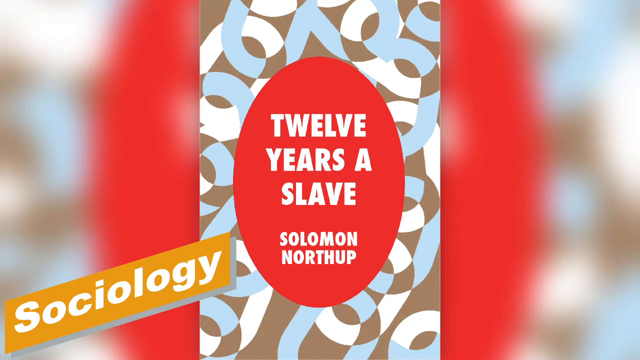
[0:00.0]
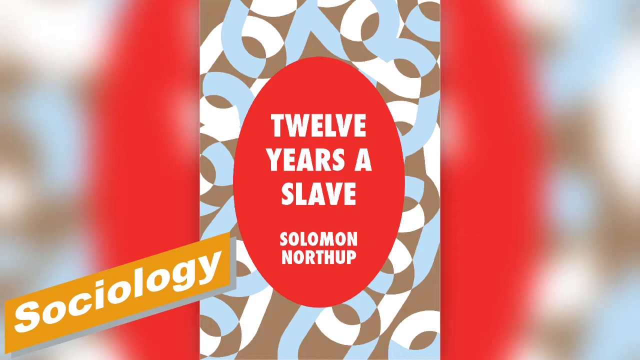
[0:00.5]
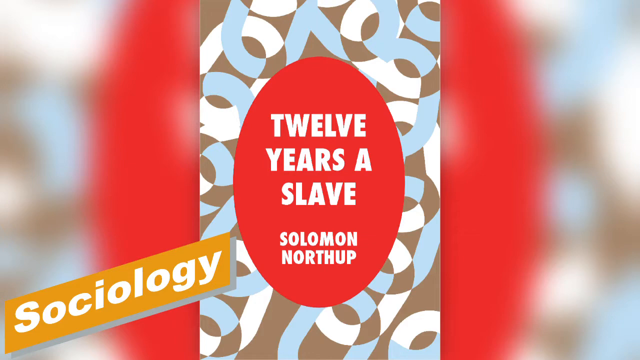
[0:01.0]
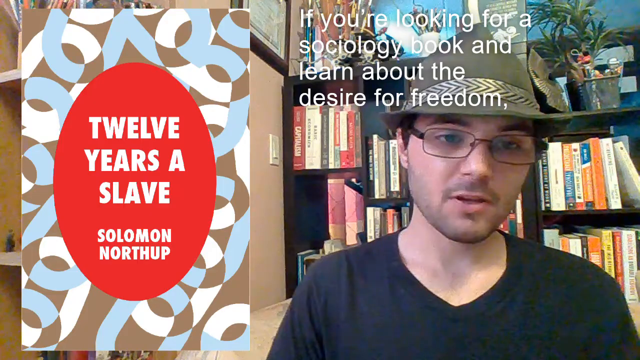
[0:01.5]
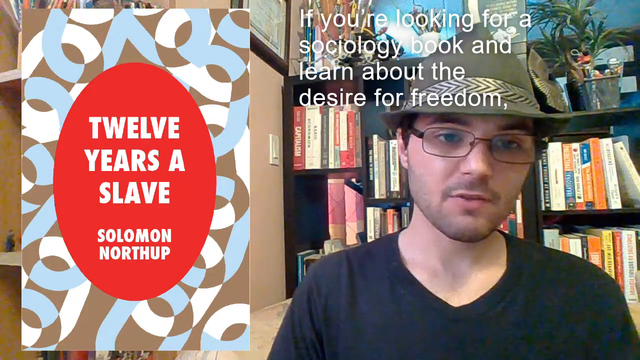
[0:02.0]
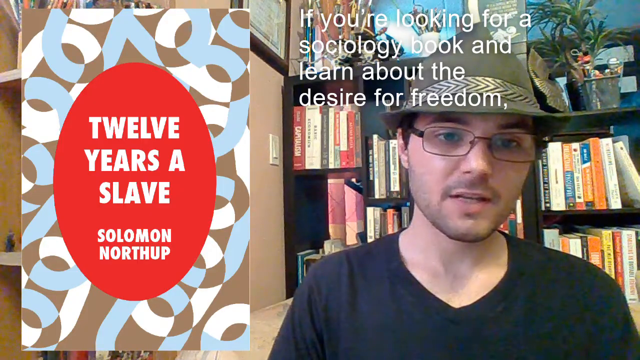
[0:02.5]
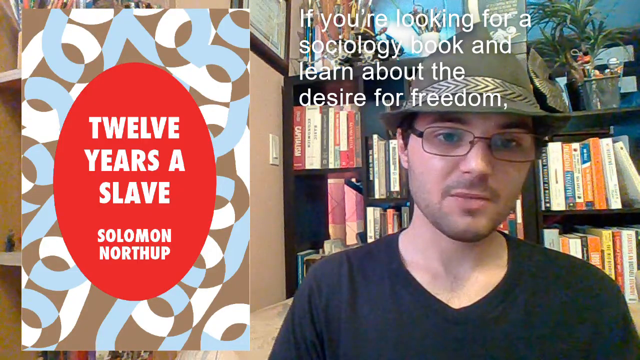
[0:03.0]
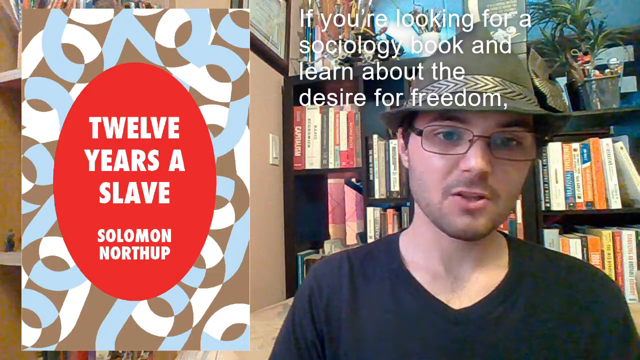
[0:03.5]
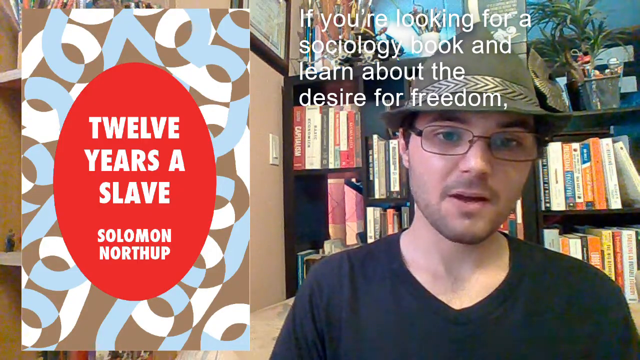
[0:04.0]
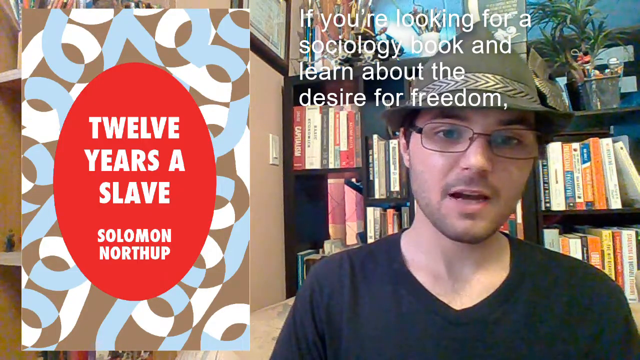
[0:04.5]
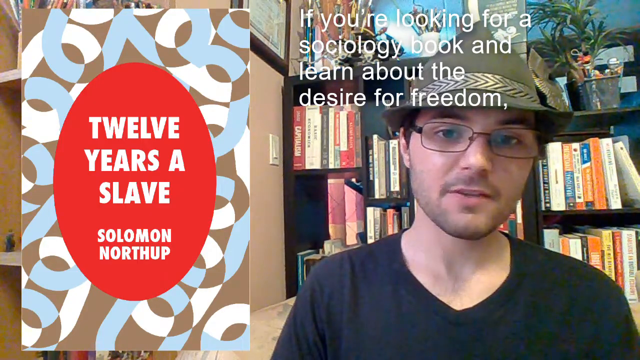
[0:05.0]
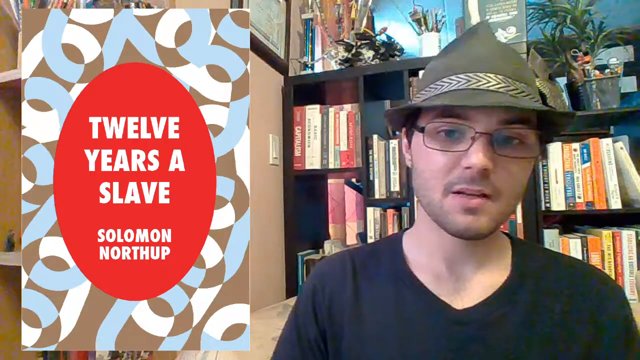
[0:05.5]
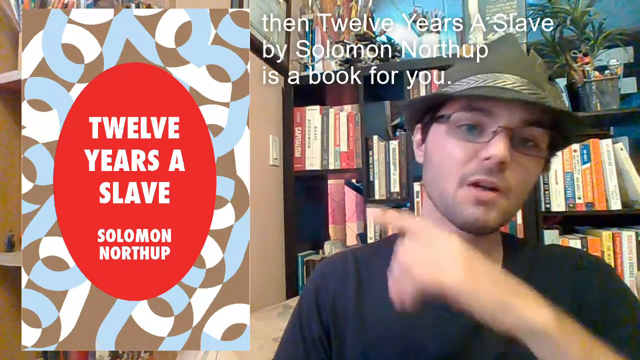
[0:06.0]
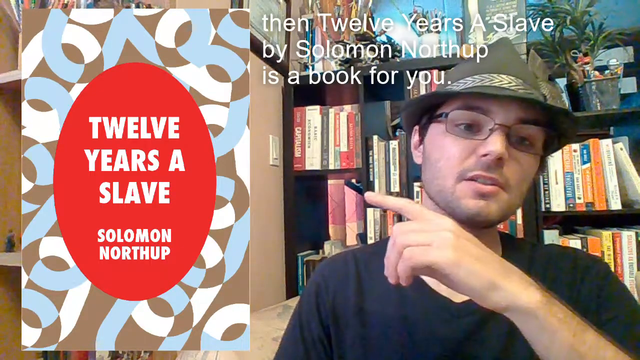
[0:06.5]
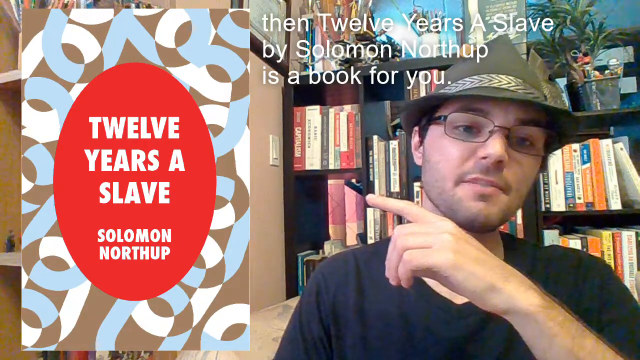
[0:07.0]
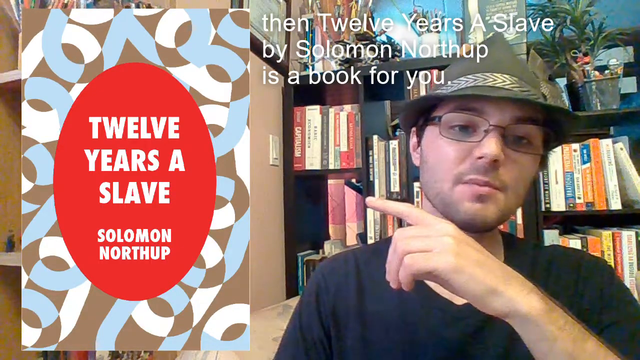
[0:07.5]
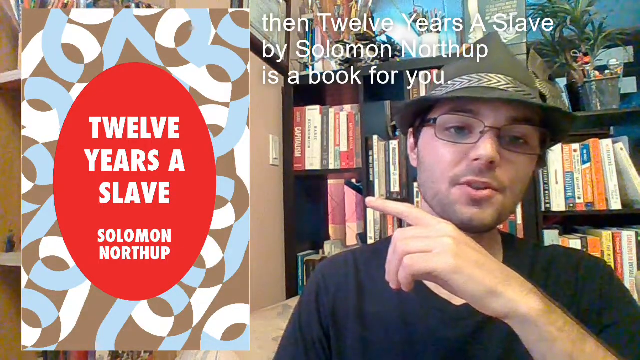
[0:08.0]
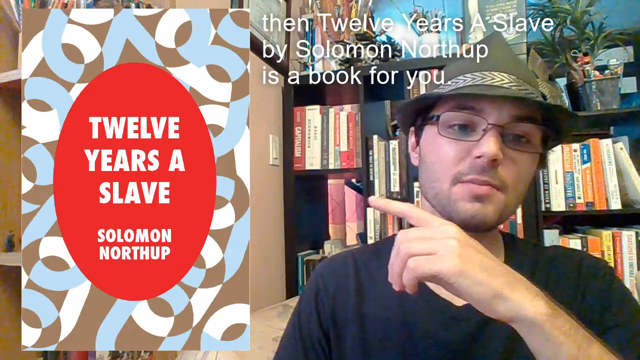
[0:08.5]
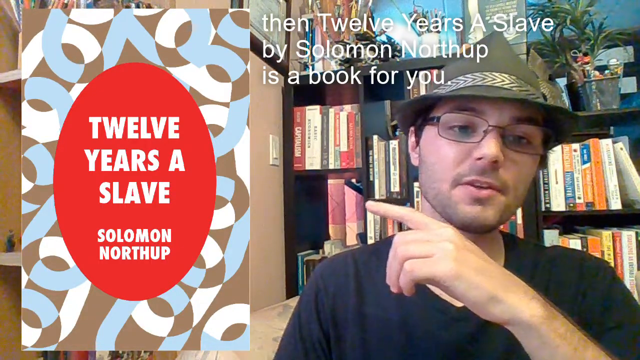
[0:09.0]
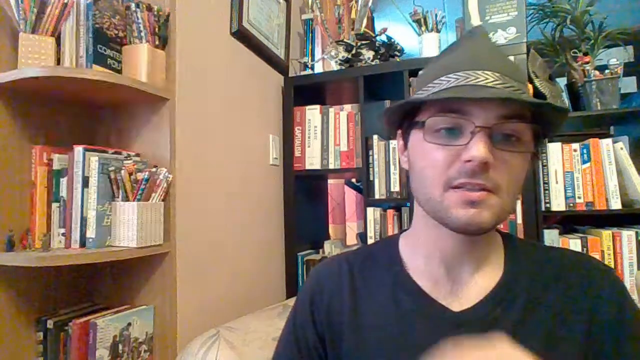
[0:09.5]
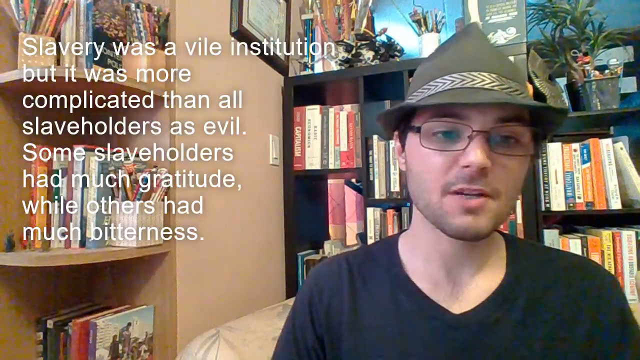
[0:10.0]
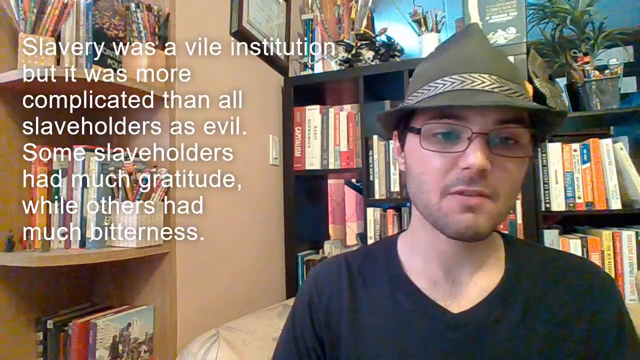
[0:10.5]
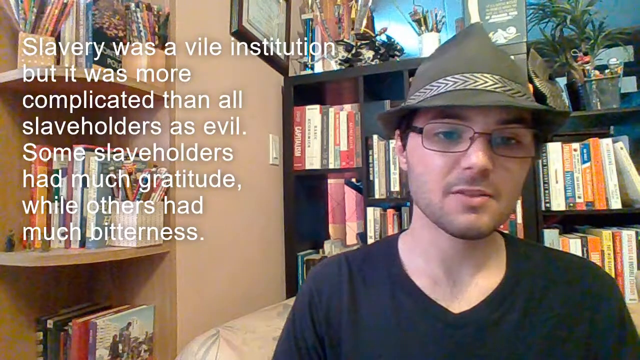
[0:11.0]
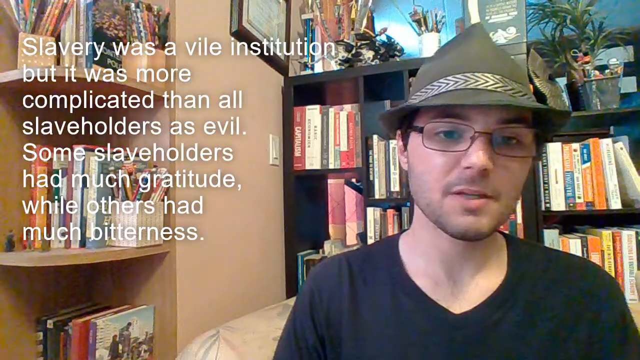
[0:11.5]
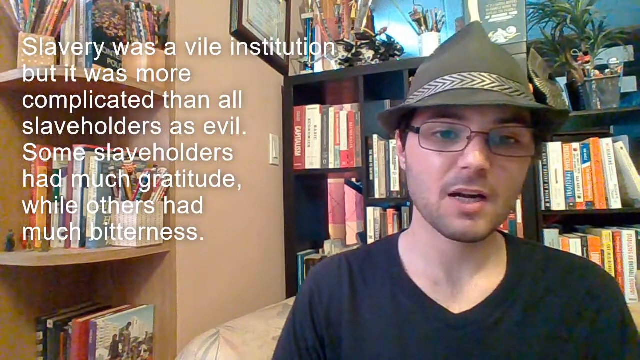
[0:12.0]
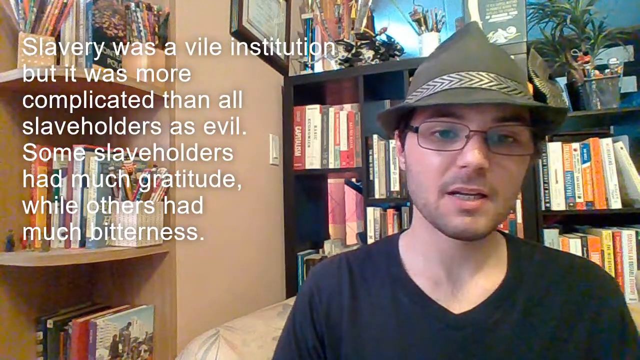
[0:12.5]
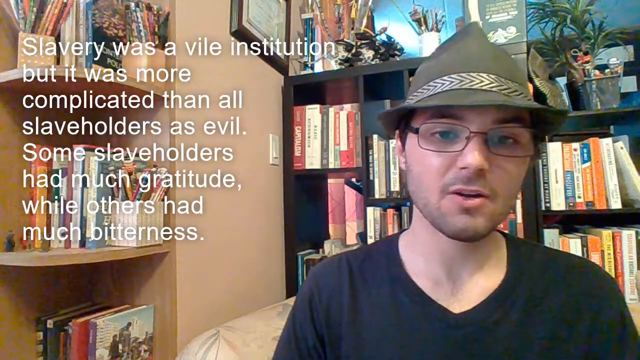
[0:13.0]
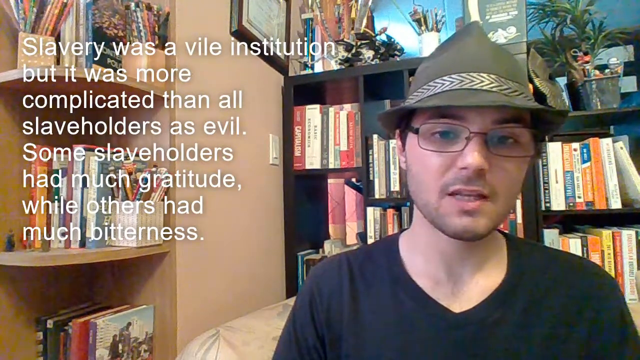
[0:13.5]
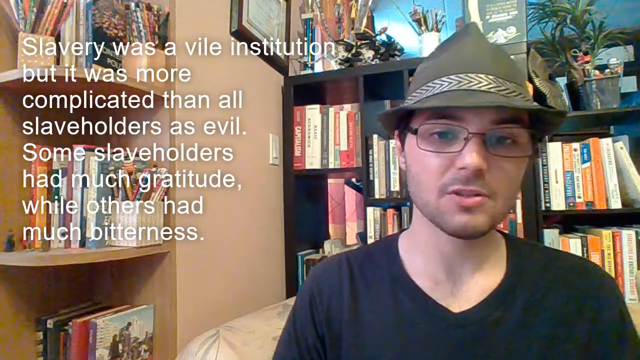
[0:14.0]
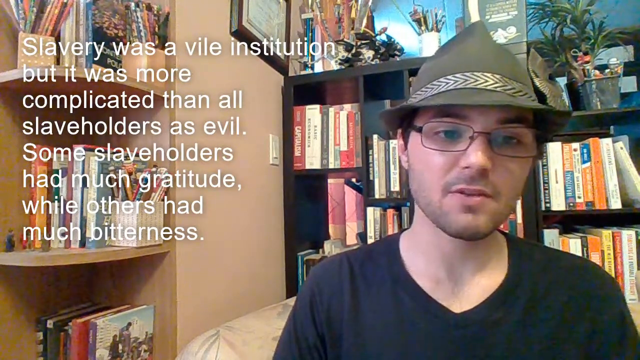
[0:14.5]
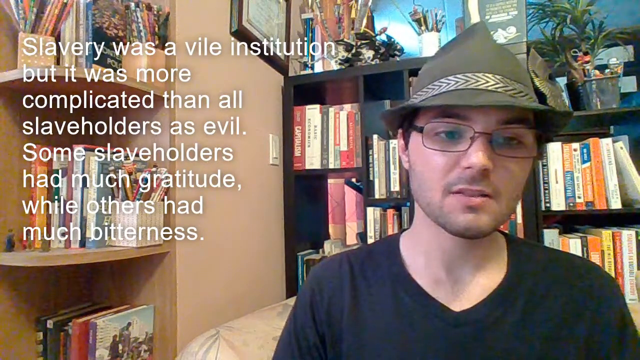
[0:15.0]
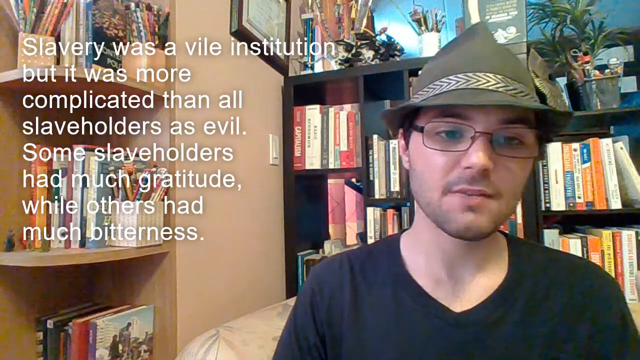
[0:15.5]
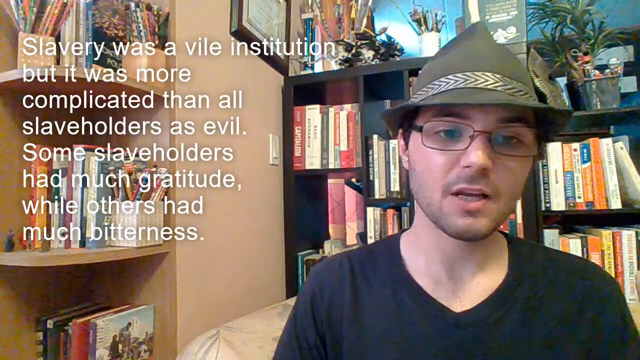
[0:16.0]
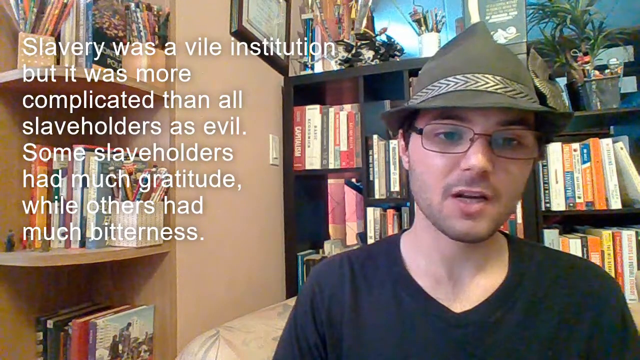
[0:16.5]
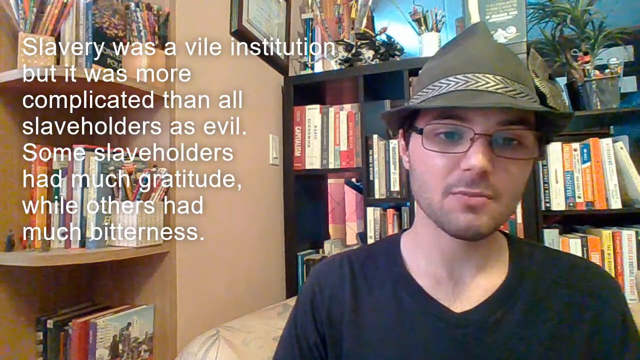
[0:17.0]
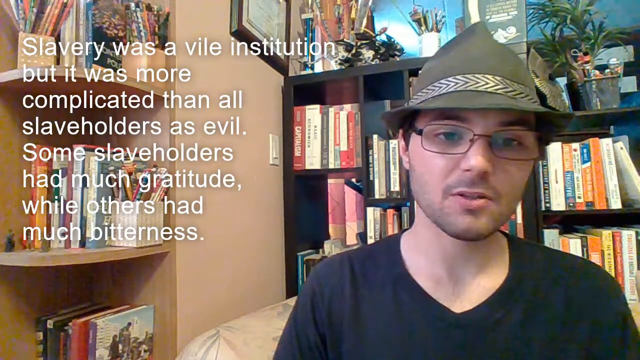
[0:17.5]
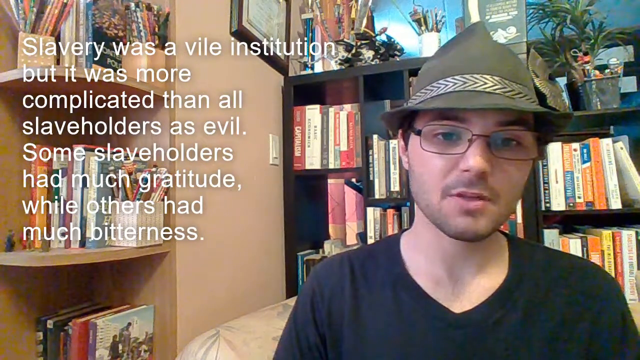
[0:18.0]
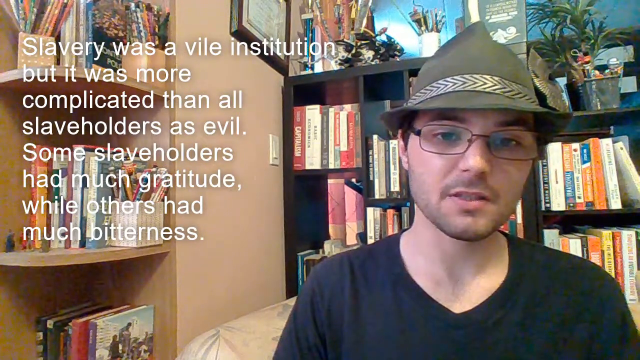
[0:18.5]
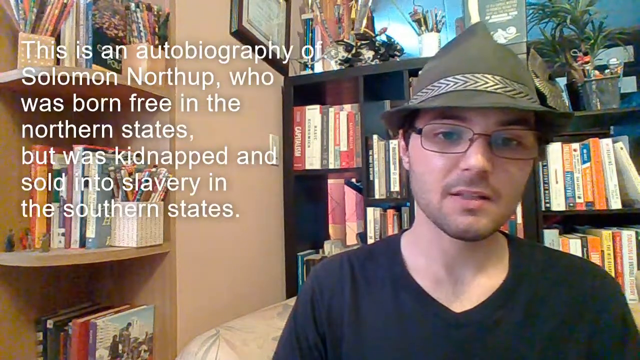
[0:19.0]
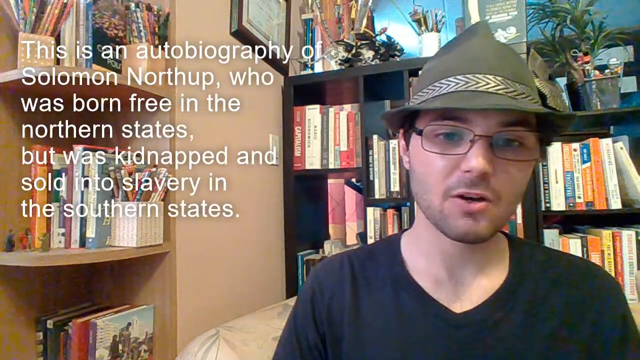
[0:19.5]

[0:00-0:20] A YouTuber presents what appears to be a book review of 12 Years a Slave by Solomon Northup, which appears to be a book. A caption in white text on the screen reads "if you are looking for a sociology book and learn about the desire for freedom then 12 years a slave by Solomon Northup is a book for you." The man points to an image of the book cover on the left side of the video, to his right. The captions continue: "slavery was a vile institution but it was more complicated than all slaveholders as evil. Some slaveholders had much gratitude while others had much bitterness. Thank you for watching."